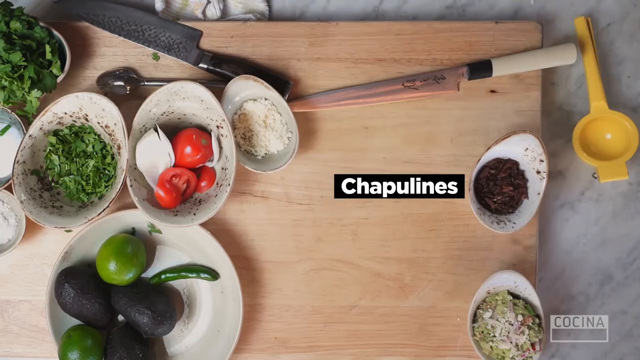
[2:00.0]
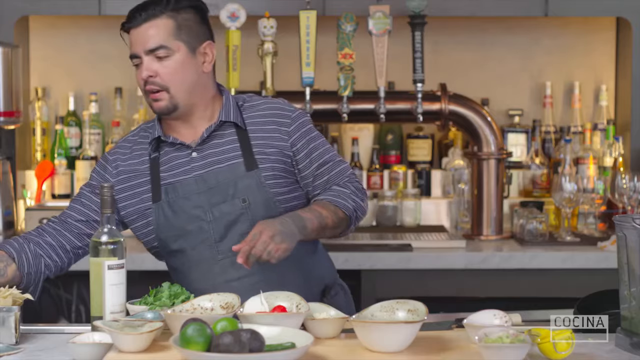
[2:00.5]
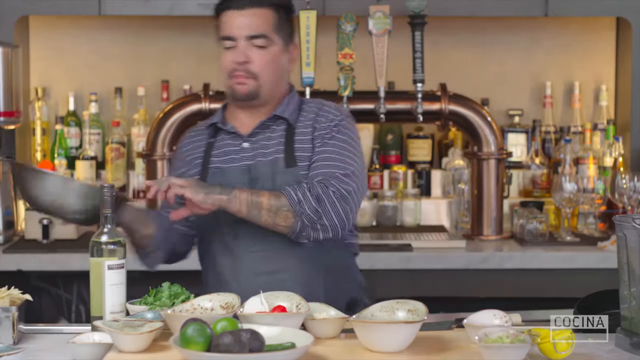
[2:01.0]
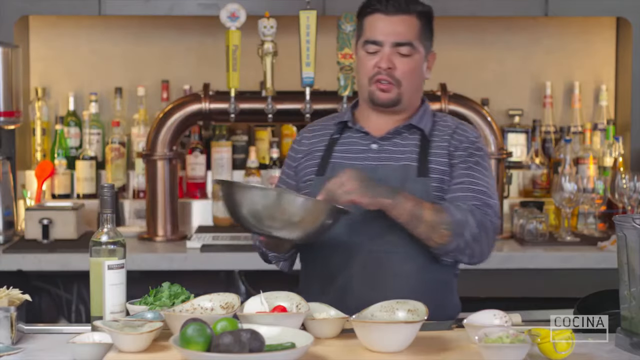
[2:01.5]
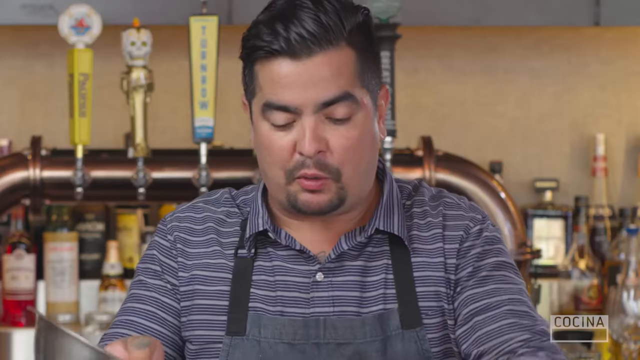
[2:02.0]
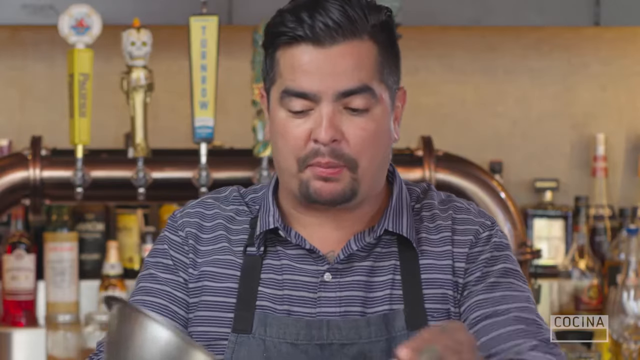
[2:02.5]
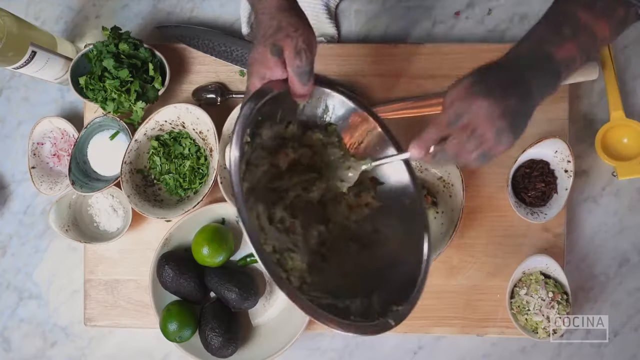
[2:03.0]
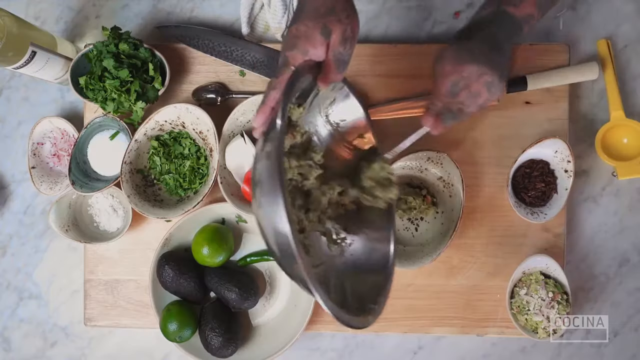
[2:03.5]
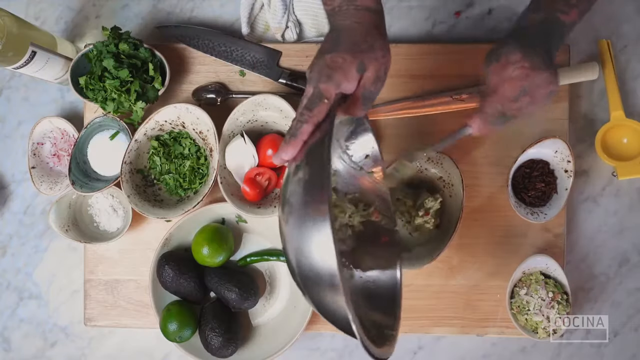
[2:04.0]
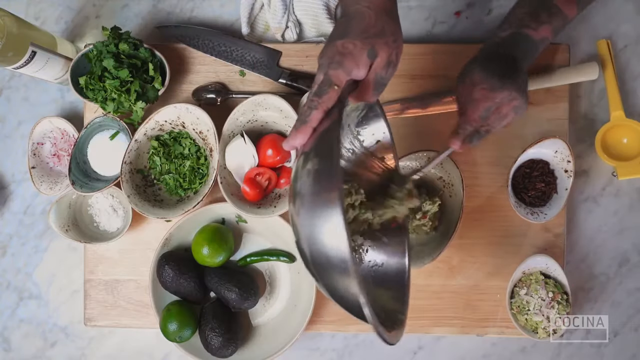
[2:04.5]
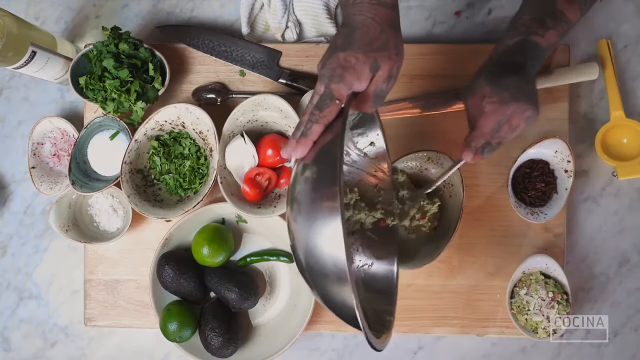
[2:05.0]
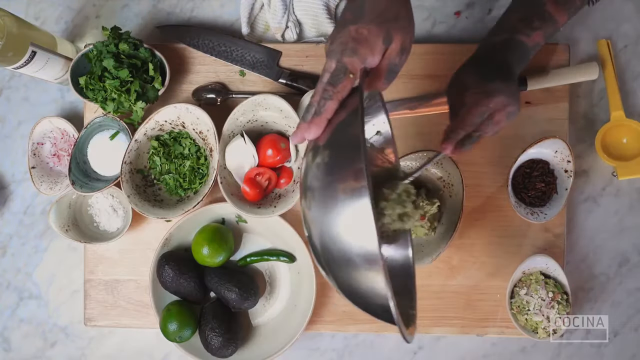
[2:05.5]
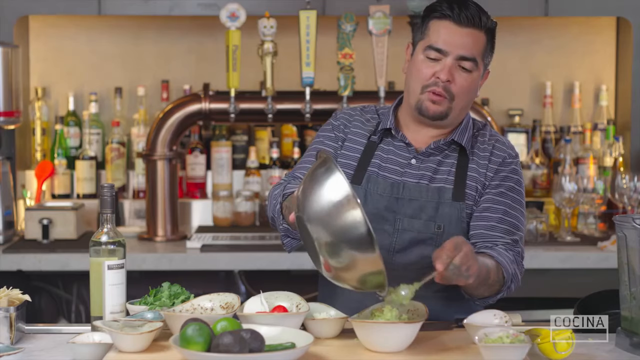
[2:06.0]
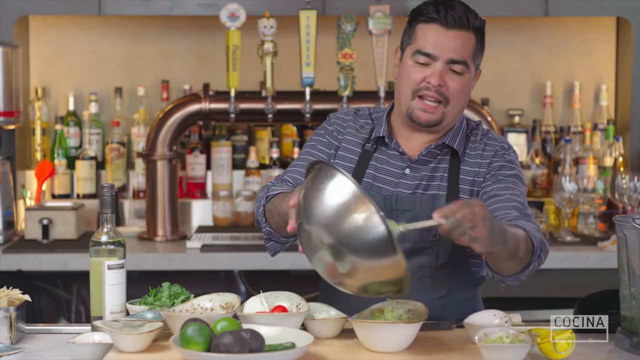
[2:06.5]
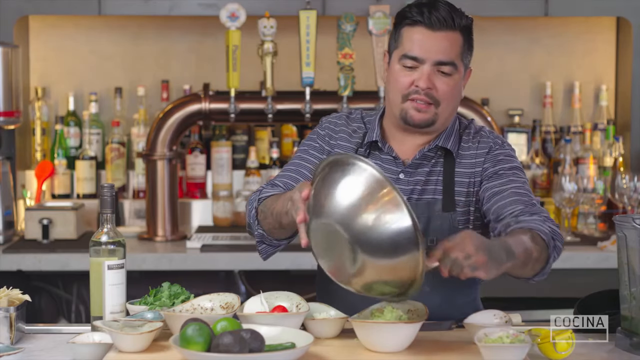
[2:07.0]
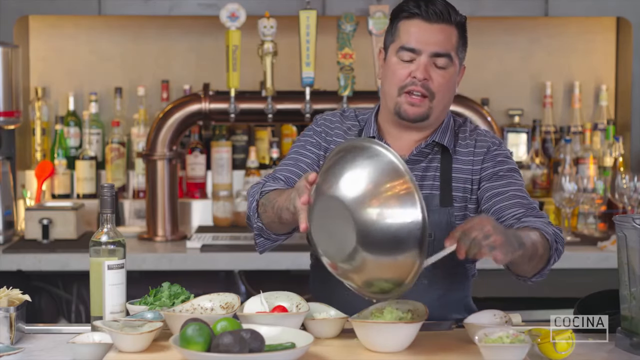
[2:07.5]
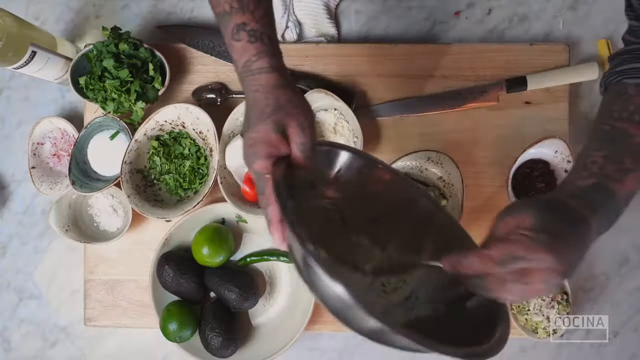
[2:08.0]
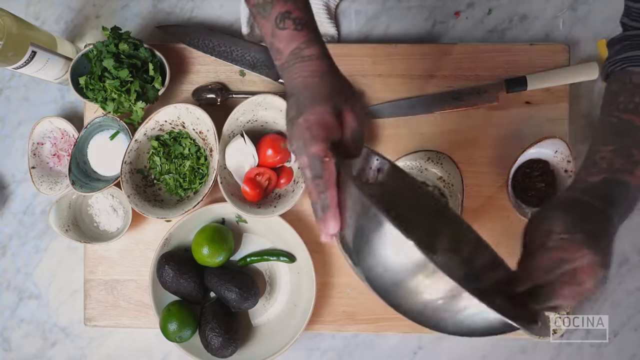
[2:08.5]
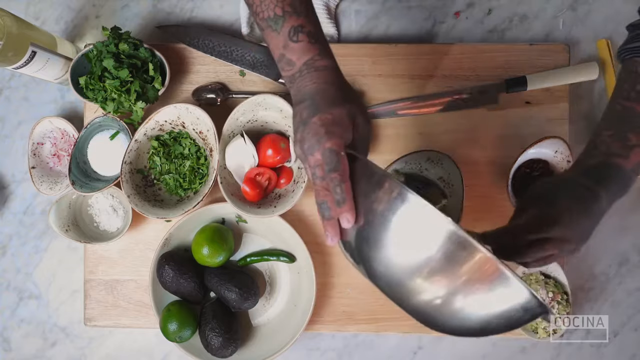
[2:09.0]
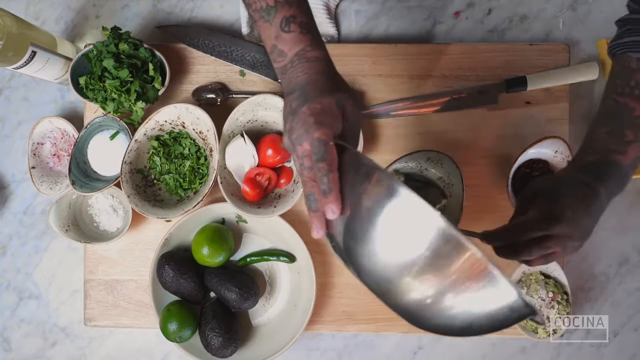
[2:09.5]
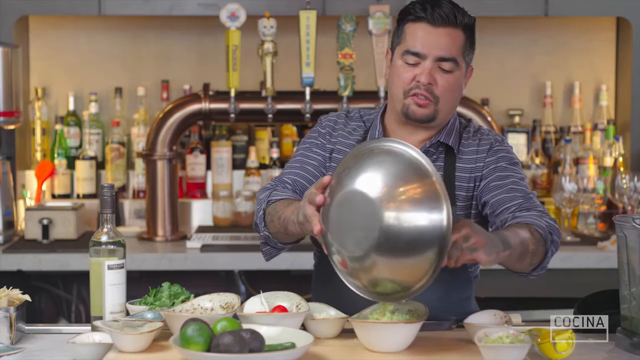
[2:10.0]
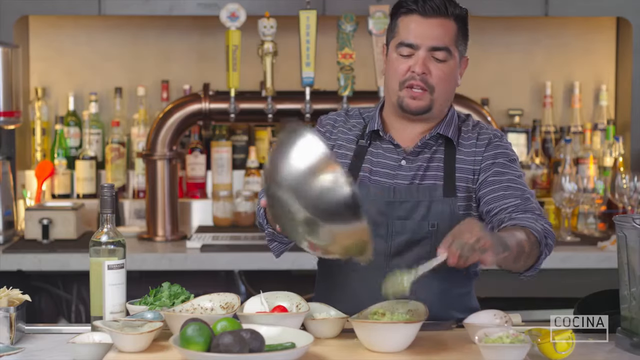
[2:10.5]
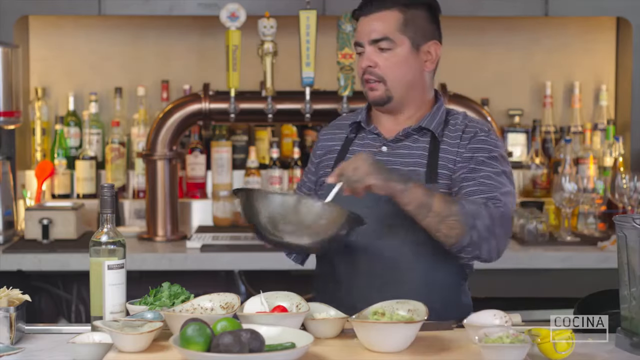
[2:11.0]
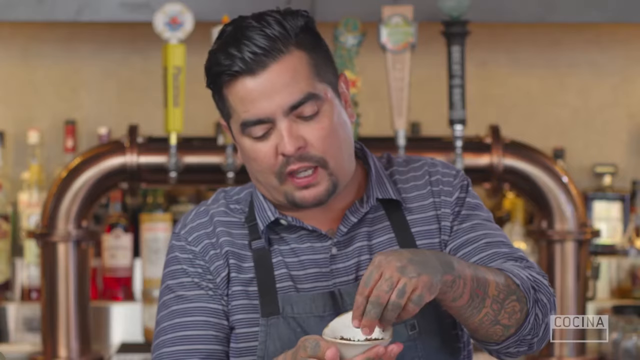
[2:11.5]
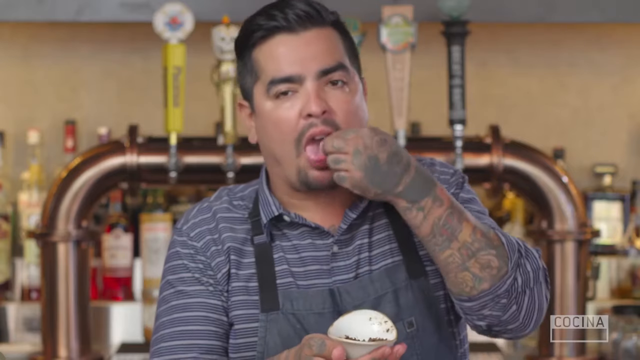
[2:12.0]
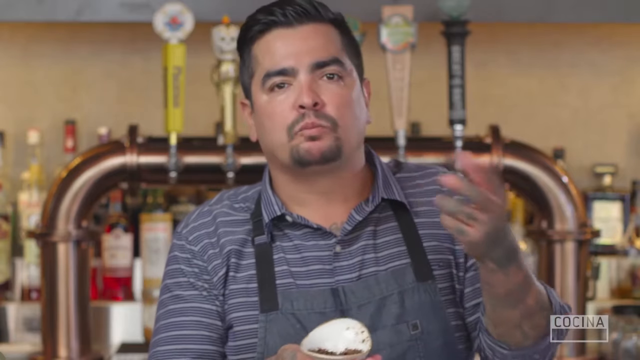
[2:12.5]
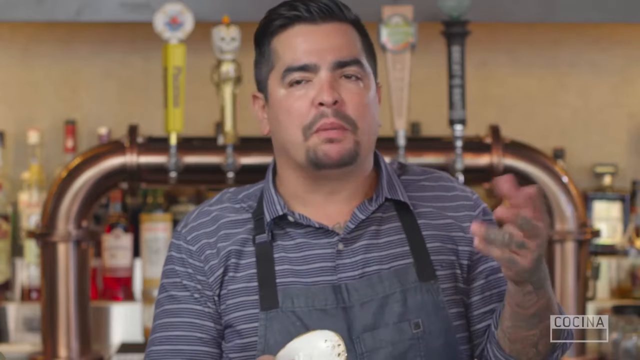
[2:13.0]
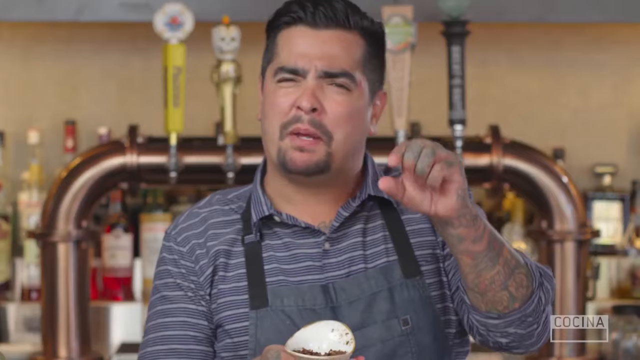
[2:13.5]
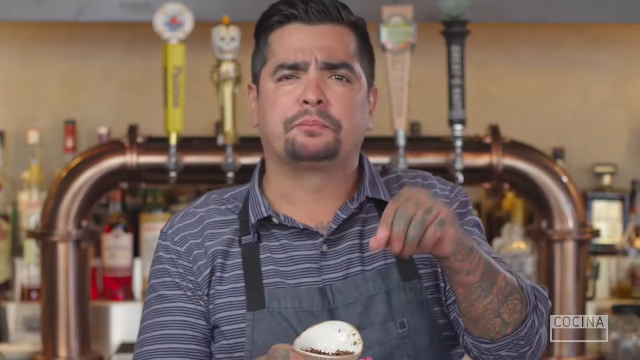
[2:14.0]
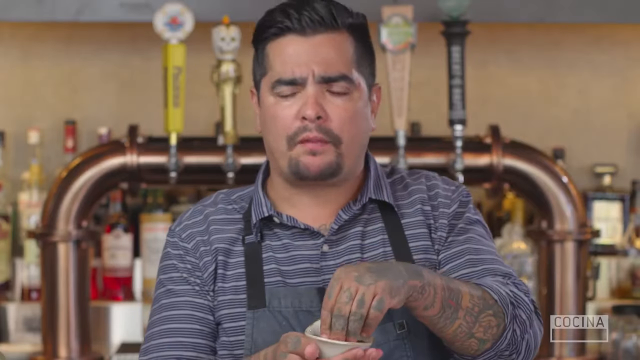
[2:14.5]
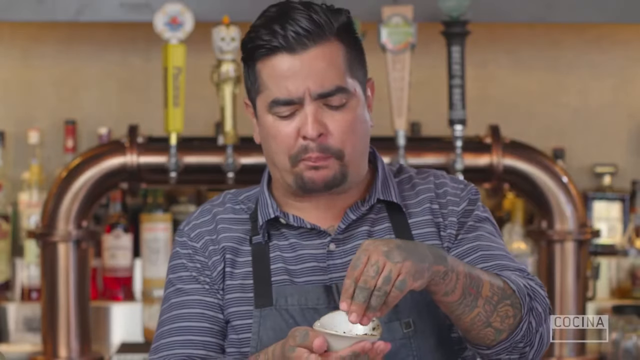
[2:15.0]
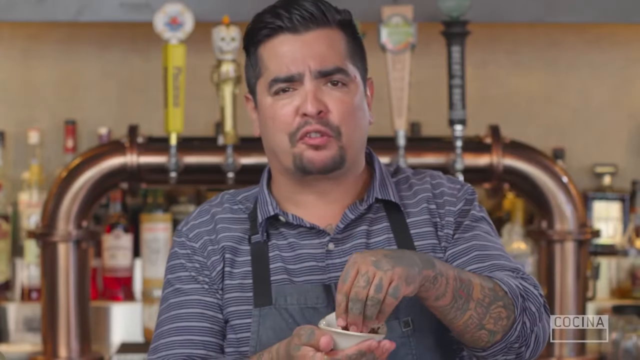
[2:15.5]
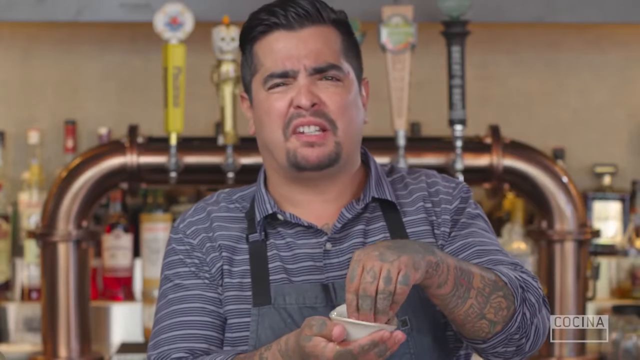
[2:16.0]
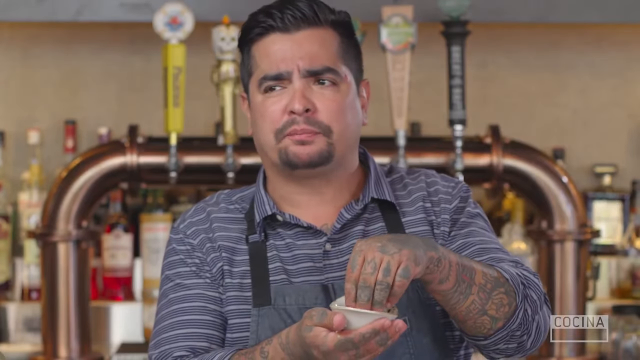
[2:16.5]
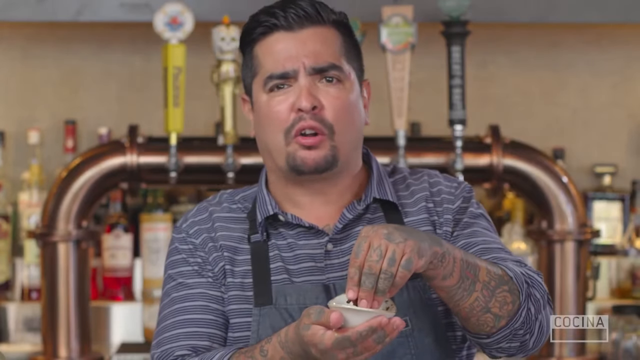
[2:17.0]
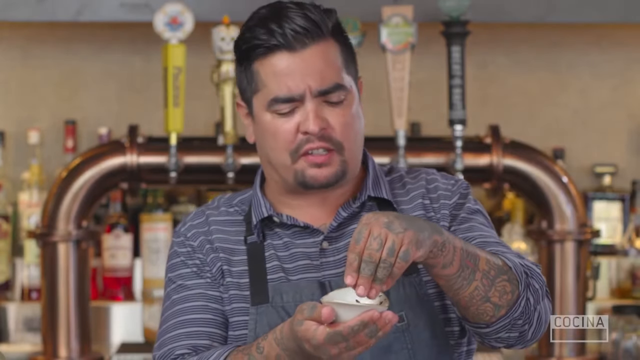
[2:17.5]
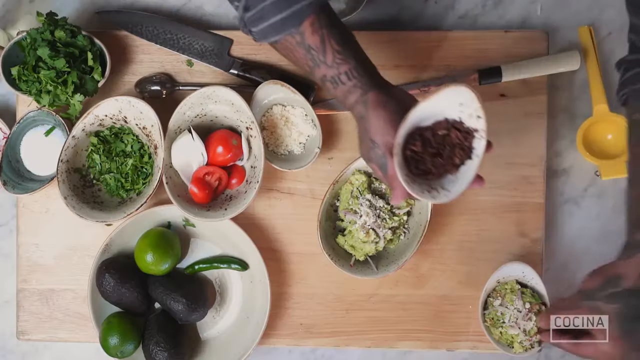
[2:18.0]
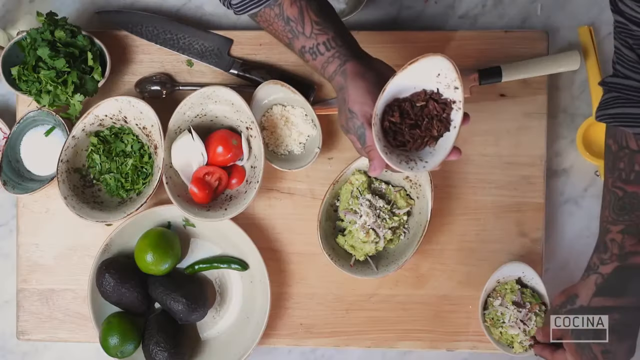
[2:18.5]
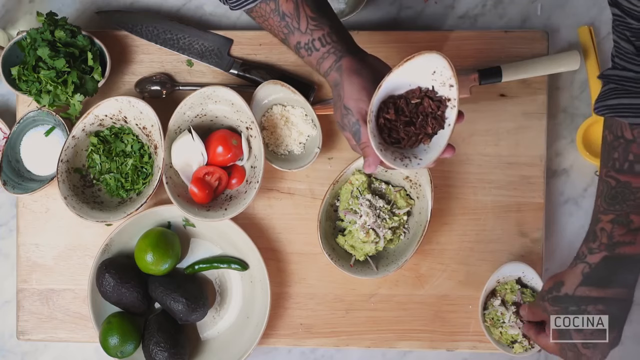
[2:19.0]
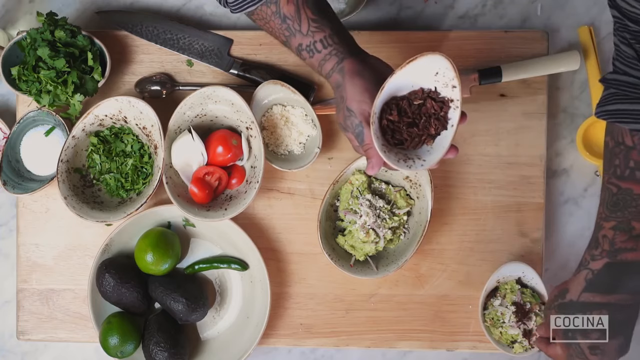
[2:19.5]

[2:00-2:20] An overhead view looks straight down at what looks like a cutting board, with two knives at the top. Ingredients are on the left side: what look like cilantro, tomatoes, onions, avocados at the bottom left, a lime and a chili. On the right side is what looks like a little bowl with brown stuff inside, with white text next to it reading "chapulines". The perspective changes to a Mexican man facing the camera, wearing a blue shirt with white stripes; he looks to be in his 30s, has a black beard and mustache, and has rolled-up sleeves with tattoos all over his arm. He brings over a big metal bowl and, talking, scrapes what looks like guacamole from it into another white bowl with a spoon. He then appears to taste the brown chapulines from a small bowl while talking, and sprinkles the chapulines over the small bowl of guacamole.